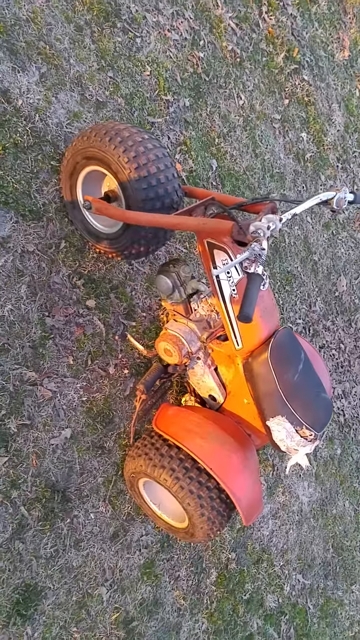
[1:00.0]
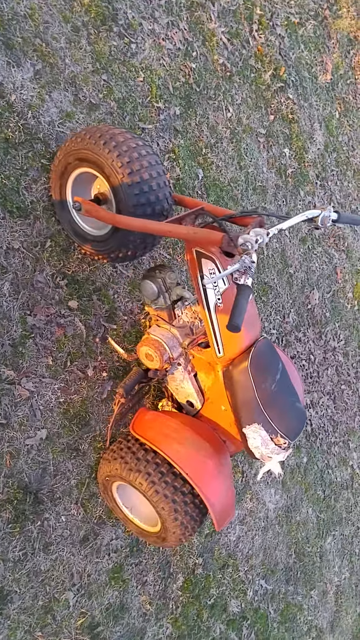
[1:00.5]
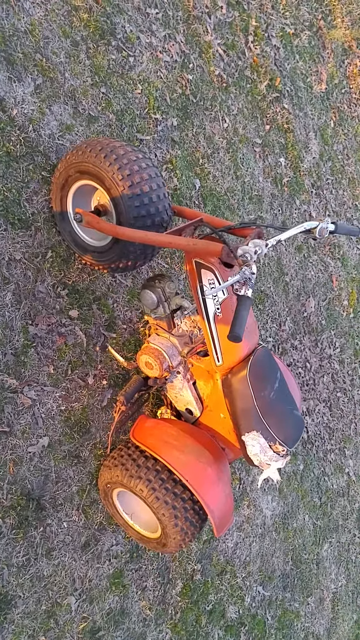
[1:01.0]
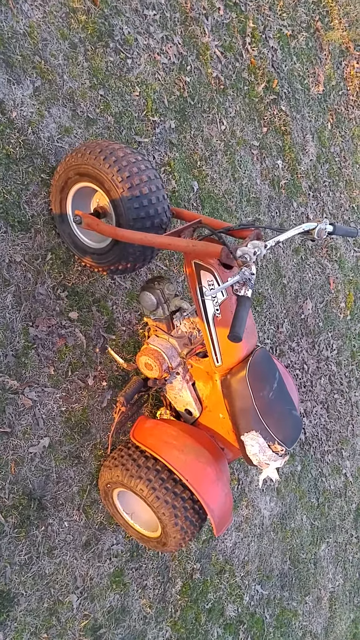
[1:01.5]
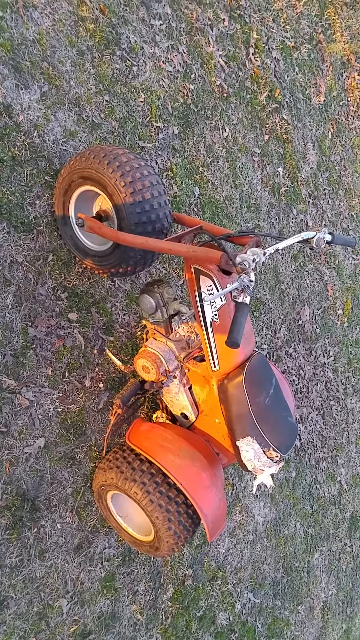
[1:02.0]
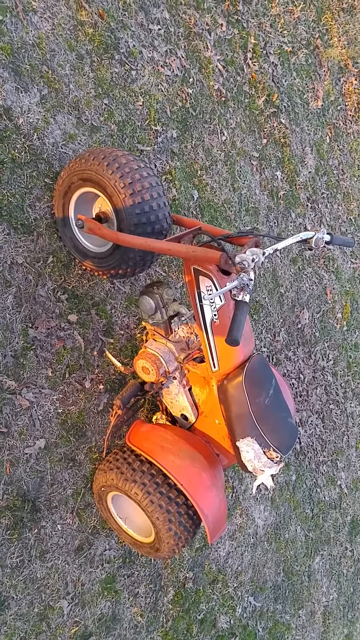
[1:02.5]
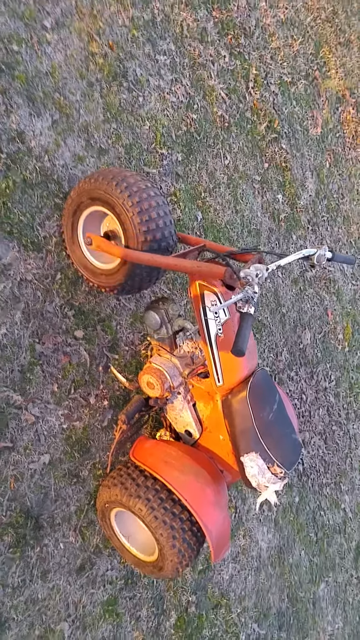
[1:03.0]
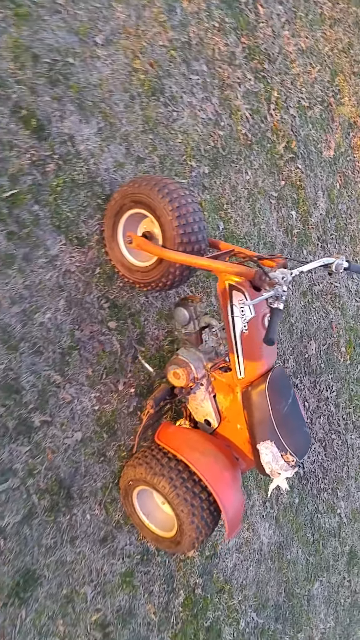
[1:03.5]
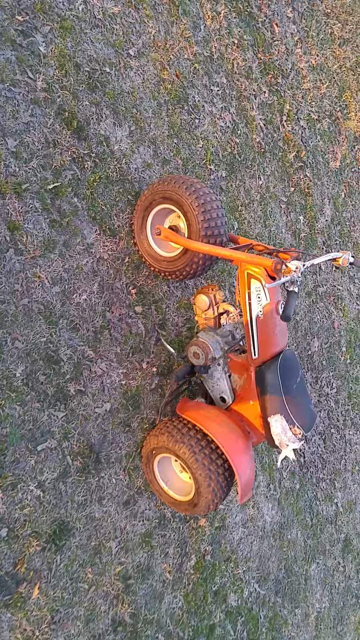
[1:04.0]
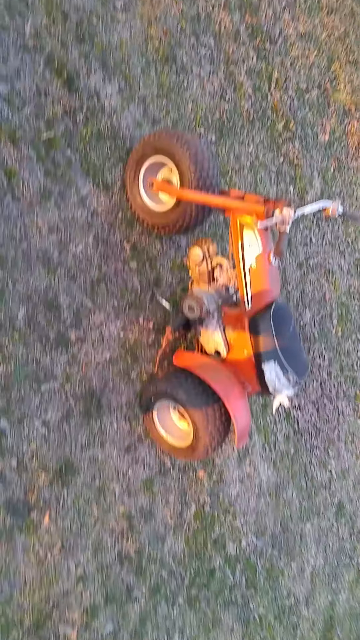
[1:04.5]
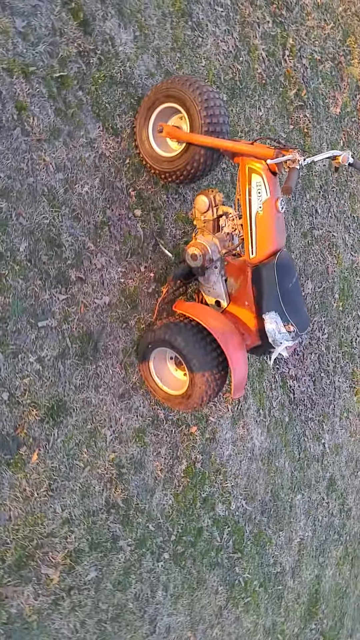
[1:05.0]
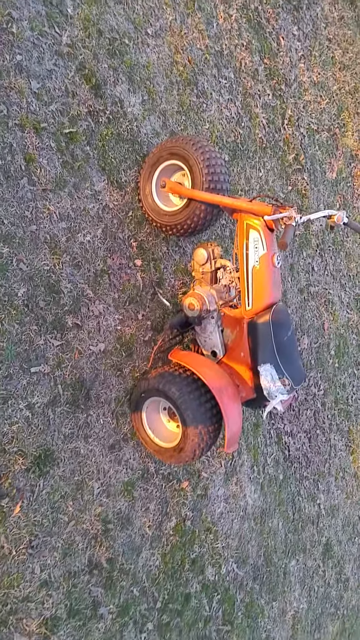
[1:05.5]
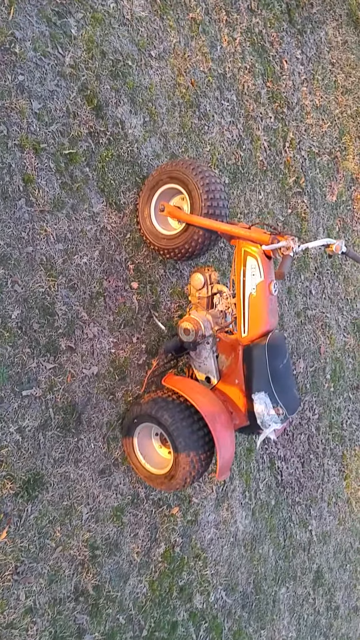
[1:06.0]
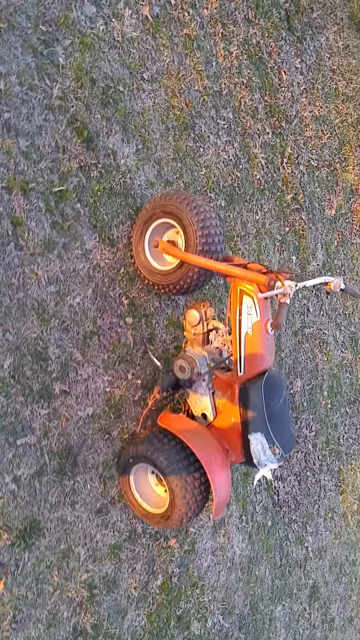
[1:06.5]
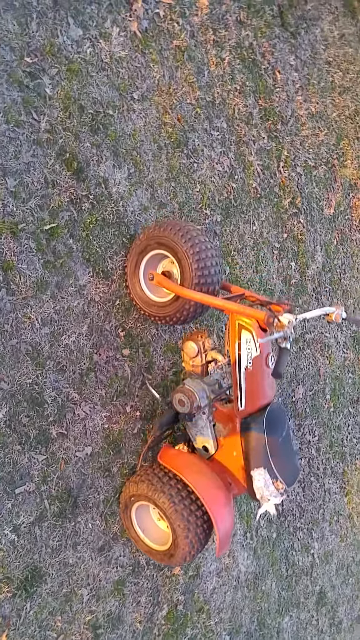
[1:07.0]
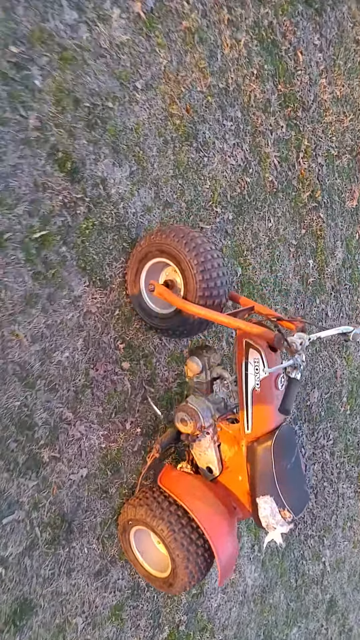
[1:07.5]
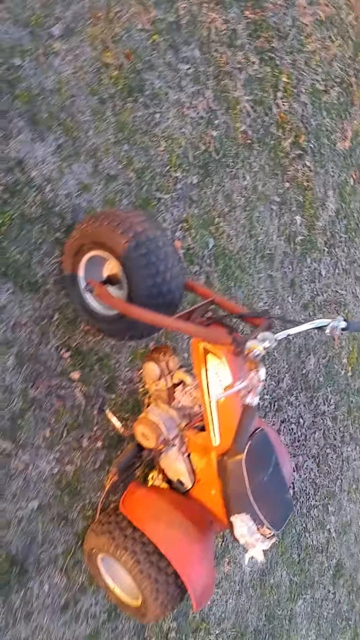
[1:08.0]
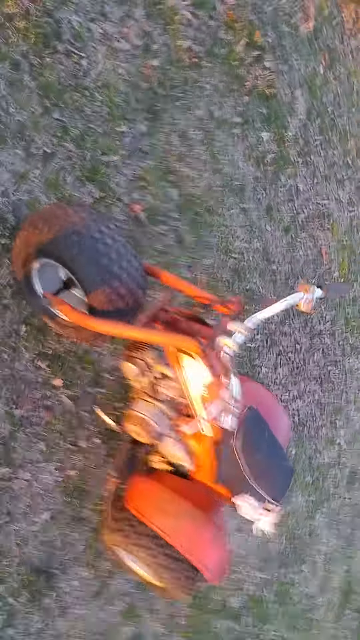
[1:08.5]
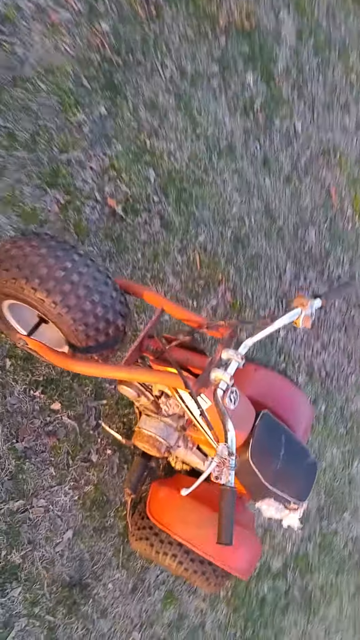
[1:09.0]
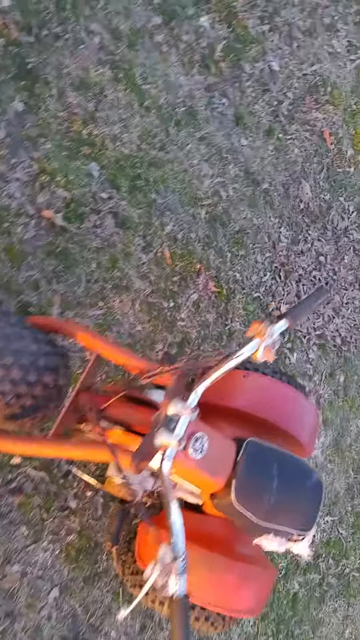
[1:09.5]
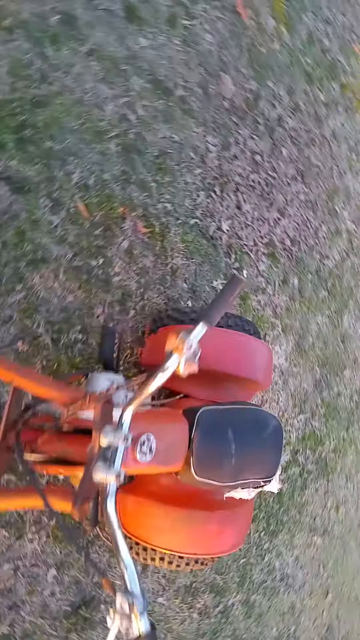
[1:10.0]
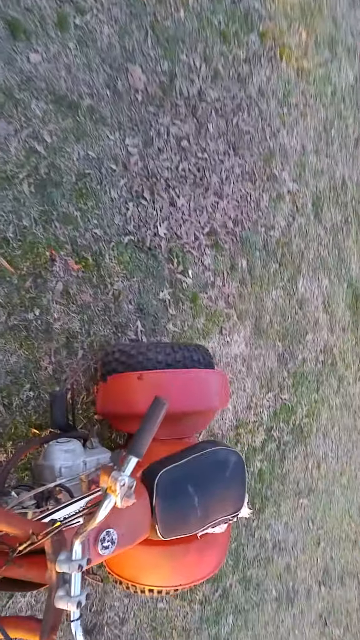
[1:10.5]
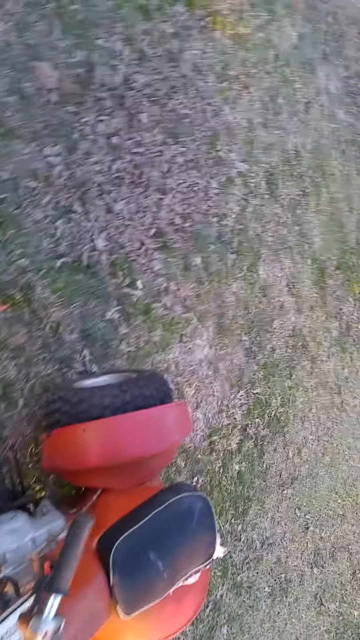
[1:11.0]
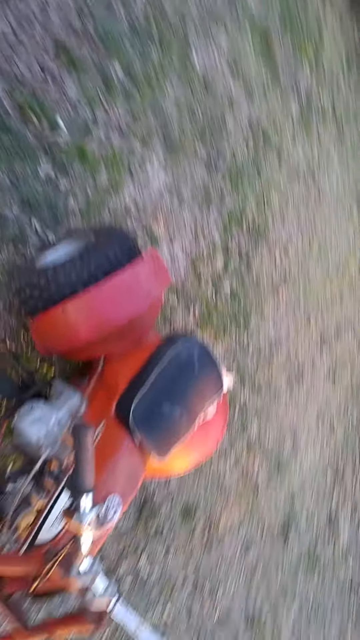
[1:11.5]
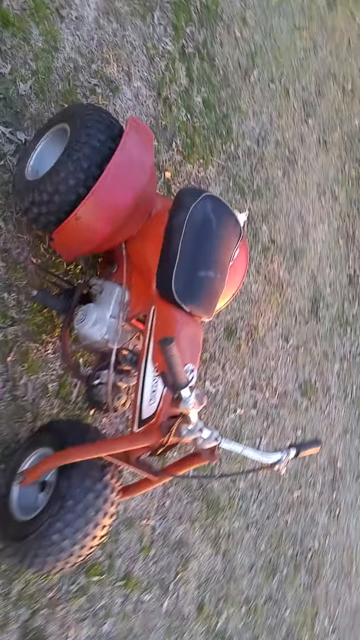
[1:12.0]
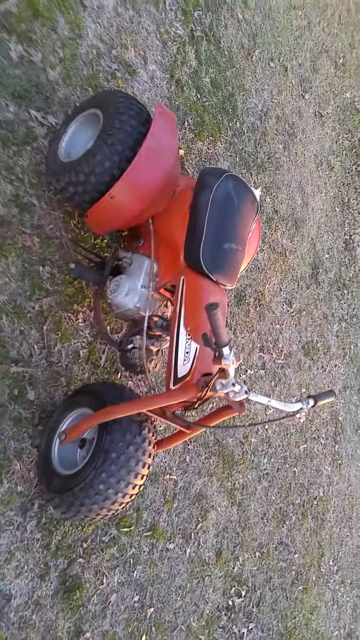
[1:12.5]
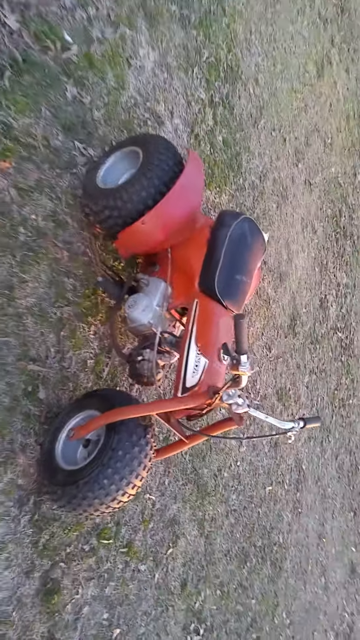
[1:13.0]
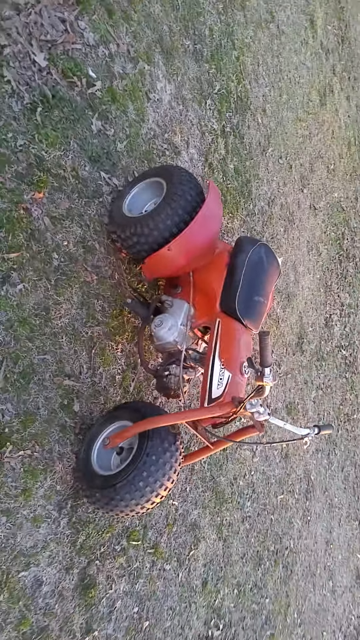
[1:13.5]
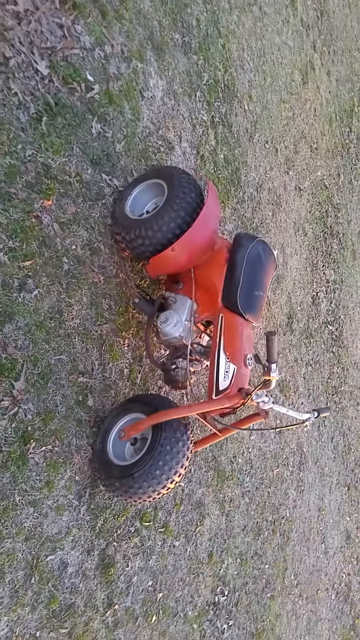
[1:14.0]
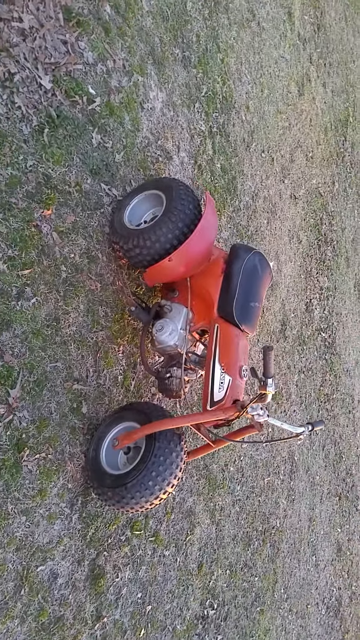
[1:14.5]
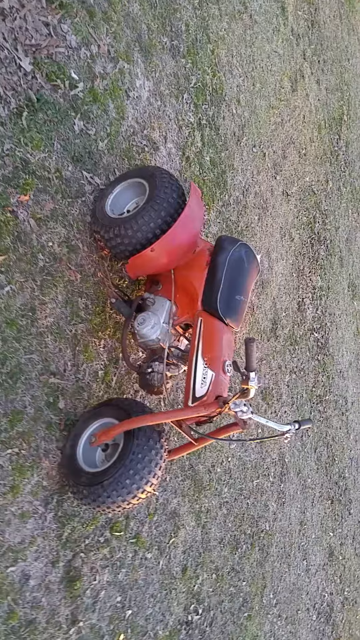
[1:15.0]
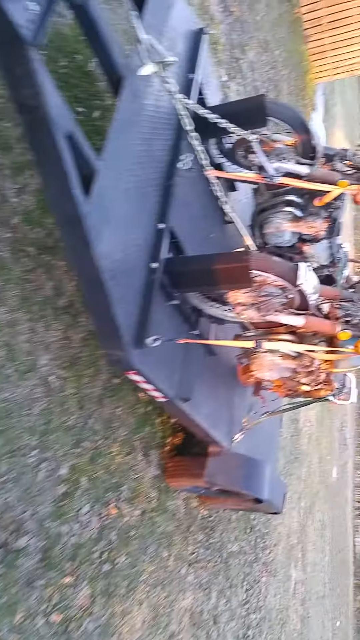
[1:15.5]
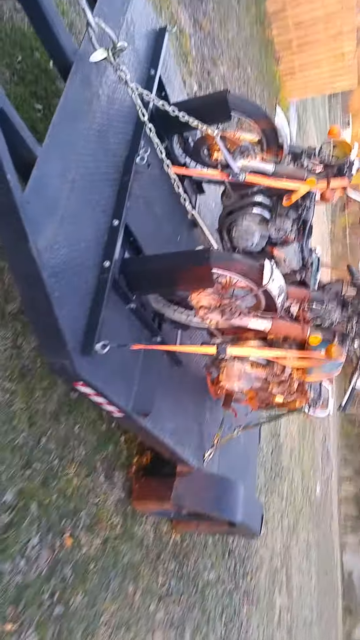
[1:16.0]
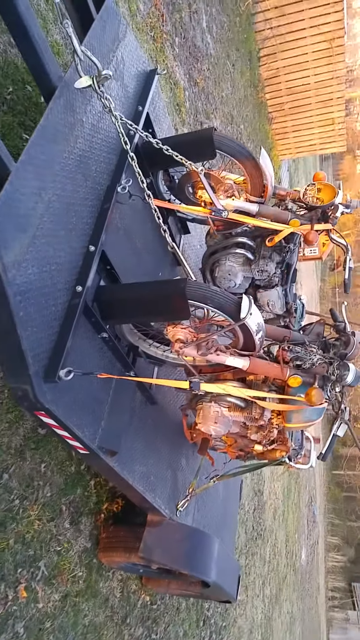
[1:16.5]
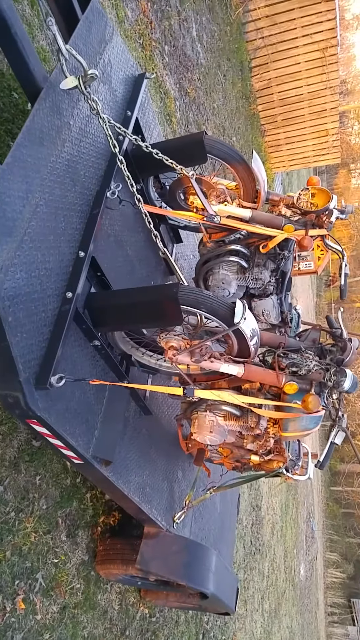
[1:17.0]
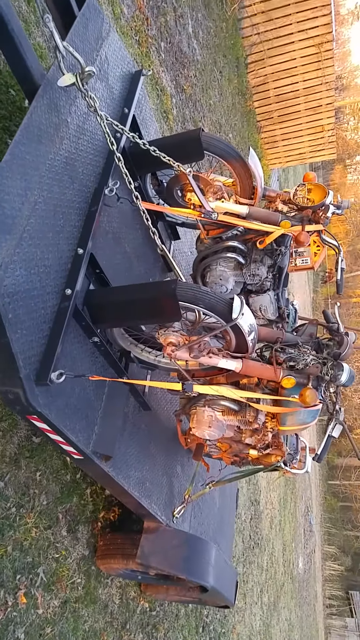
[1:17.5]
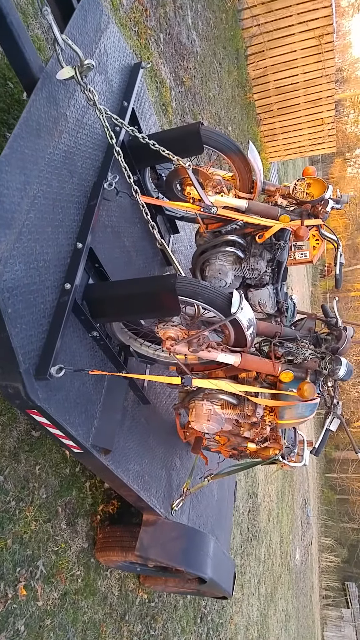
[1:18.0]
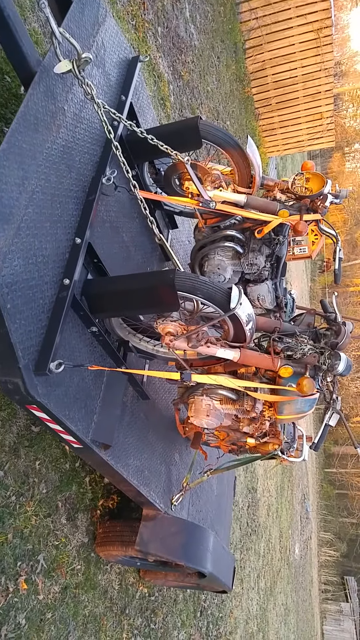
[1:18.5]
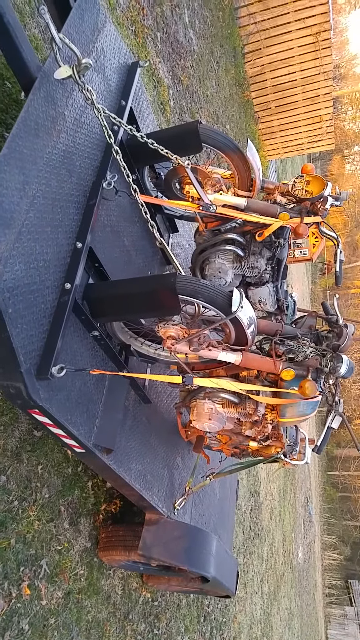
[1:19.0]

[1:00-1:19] The same three-wheeler is seen from a side view, sort of from overhead. The front tire is visible, along with the red metal portion the tires are attached to; a black screw attaches the tire to the metal area. The metal handlebars have a black rubber protective coating. The body of the three-wheeler is red and orange, with some sort of black and white logo on the left side of the body. The left back tire is visible, along with the part of the three-wheeler that covers the tire, which is red like the body.